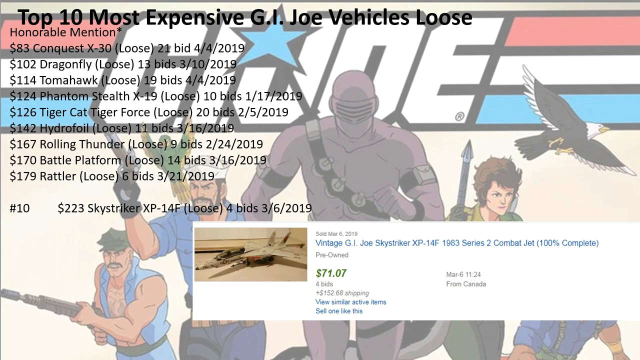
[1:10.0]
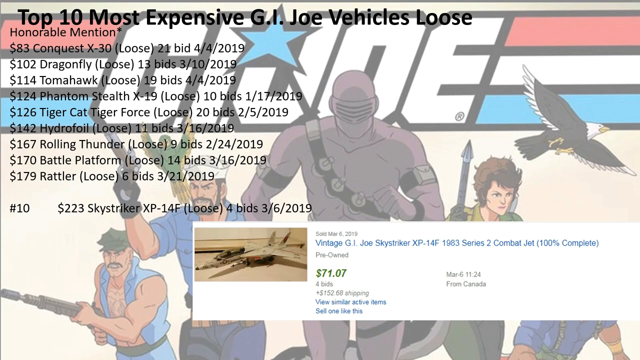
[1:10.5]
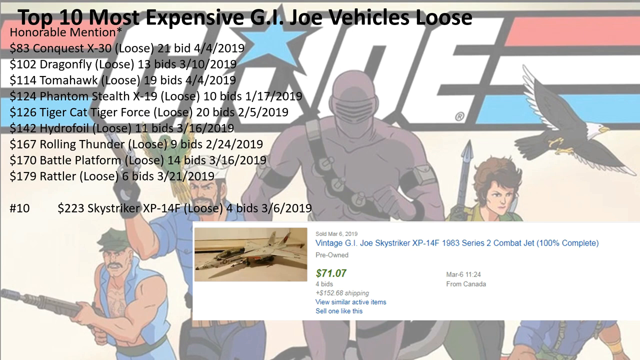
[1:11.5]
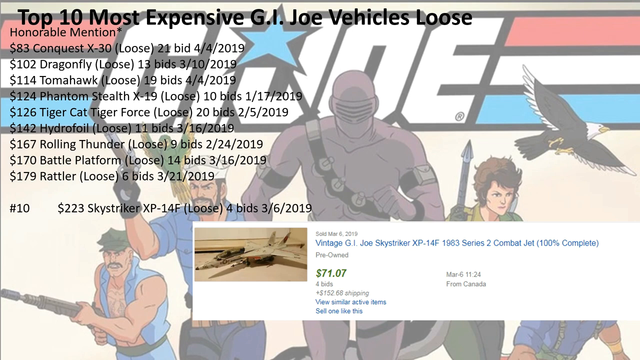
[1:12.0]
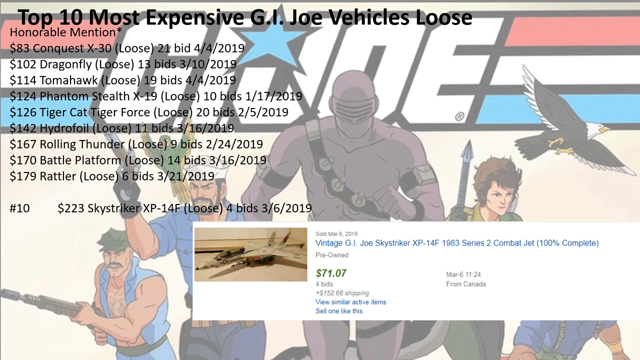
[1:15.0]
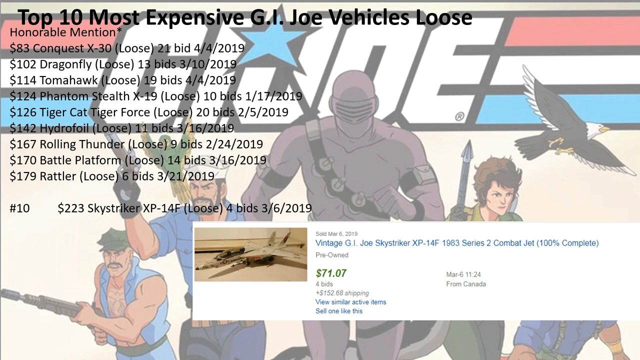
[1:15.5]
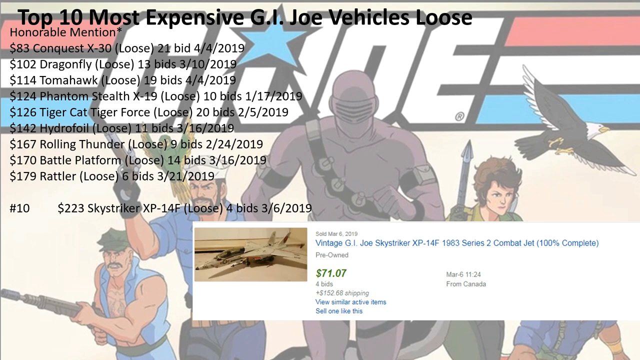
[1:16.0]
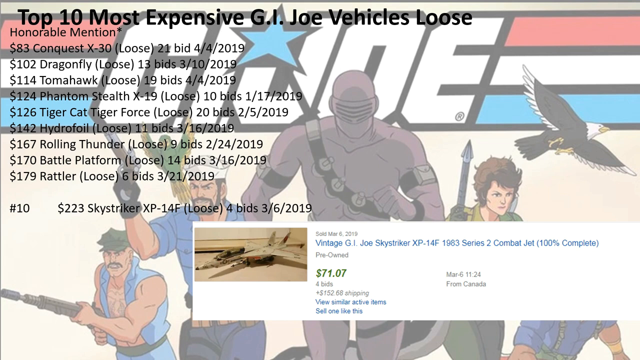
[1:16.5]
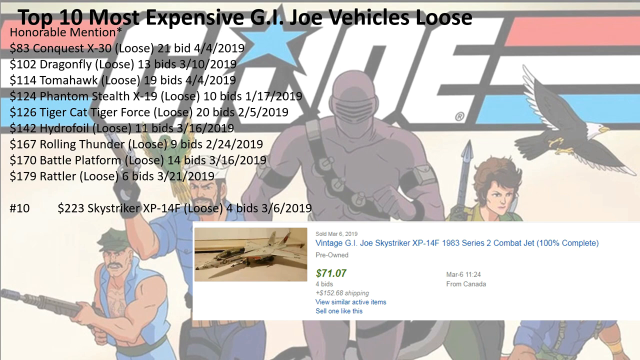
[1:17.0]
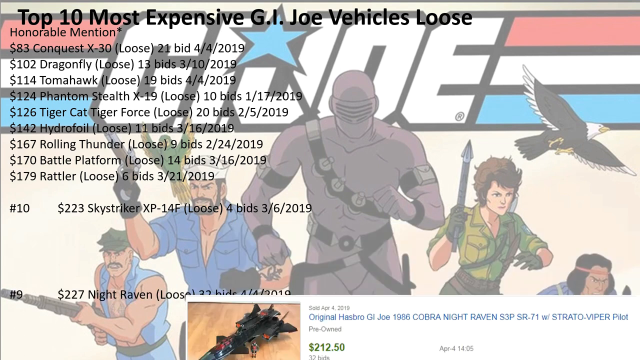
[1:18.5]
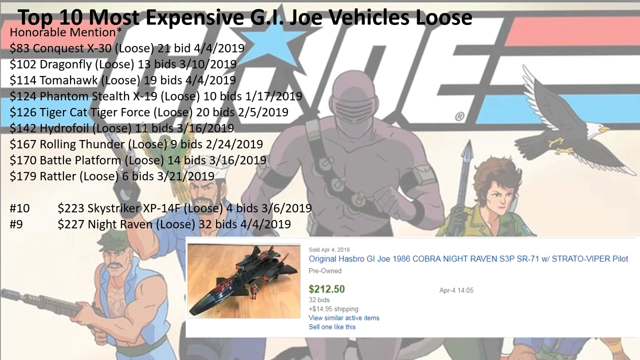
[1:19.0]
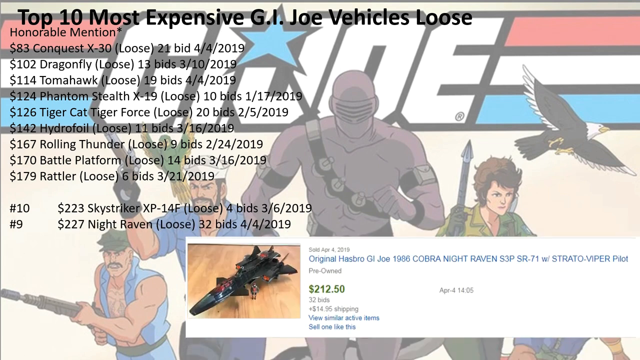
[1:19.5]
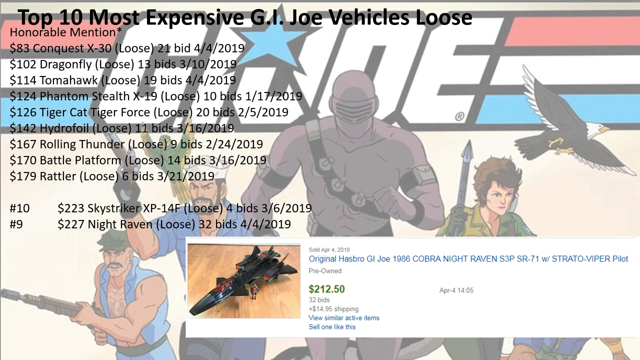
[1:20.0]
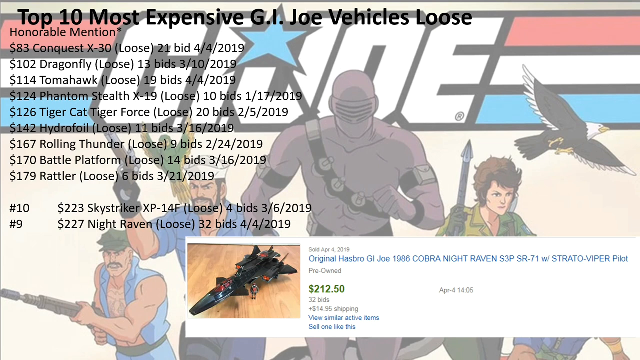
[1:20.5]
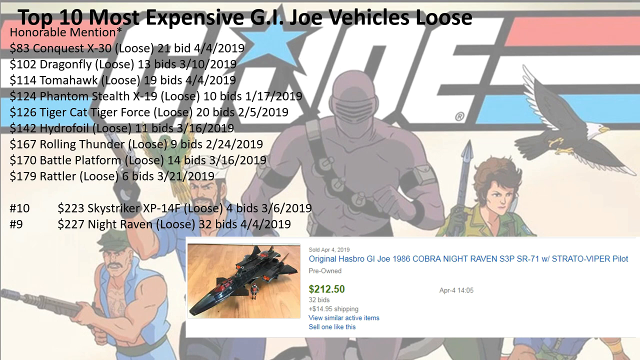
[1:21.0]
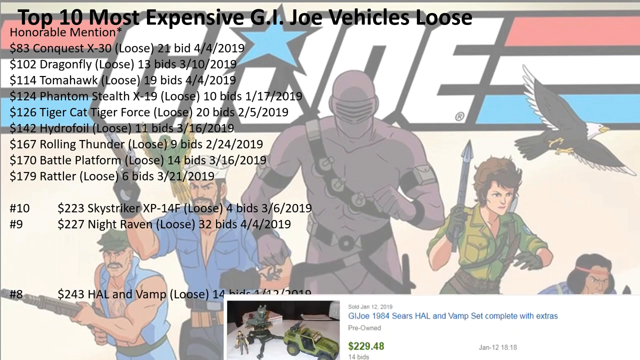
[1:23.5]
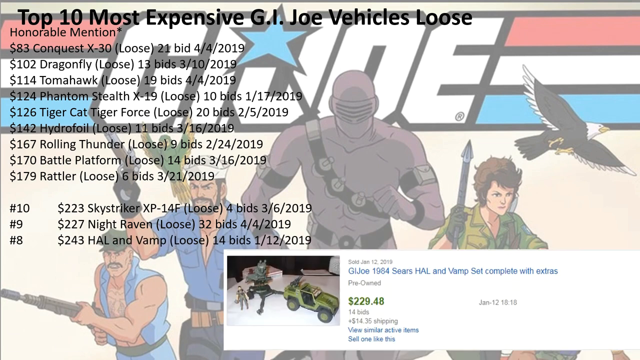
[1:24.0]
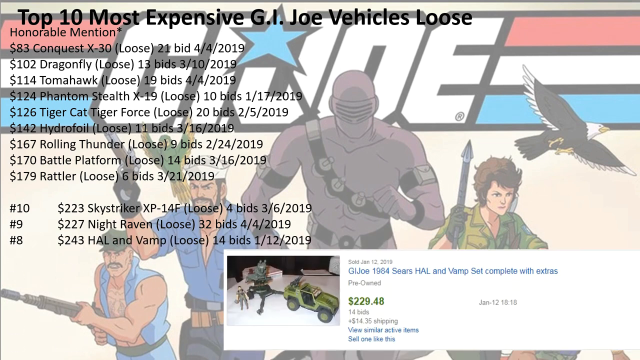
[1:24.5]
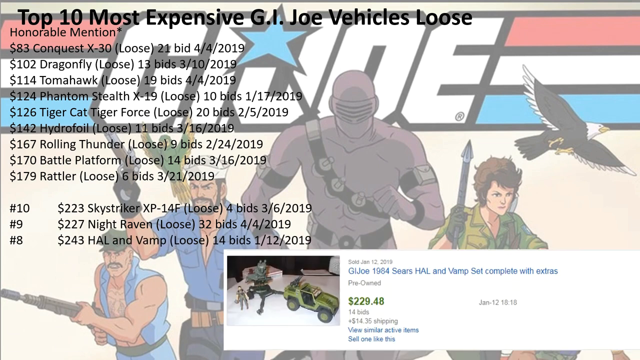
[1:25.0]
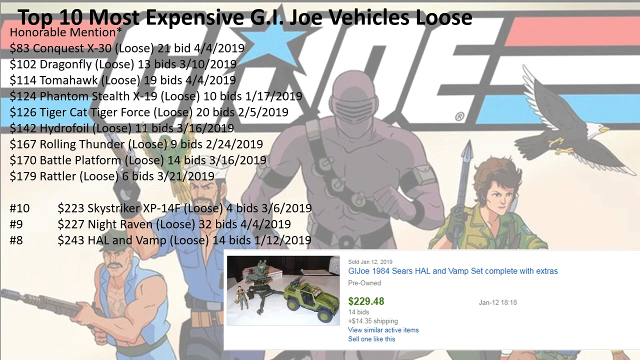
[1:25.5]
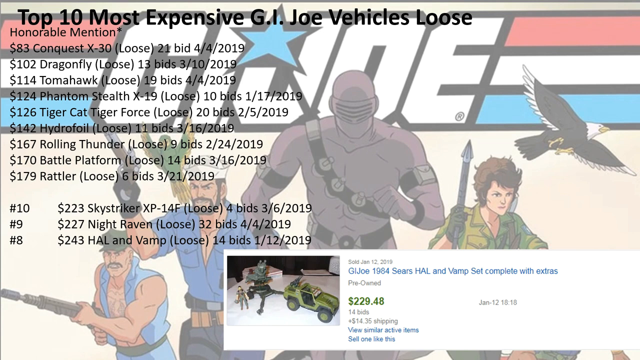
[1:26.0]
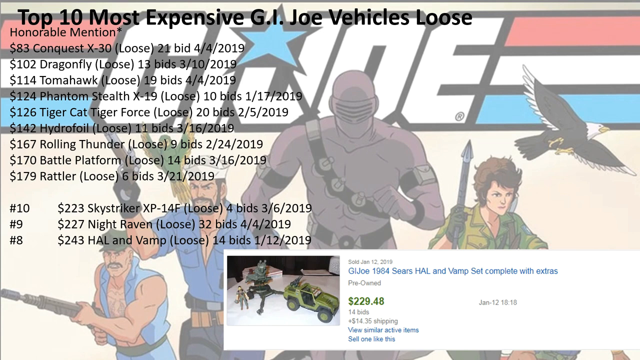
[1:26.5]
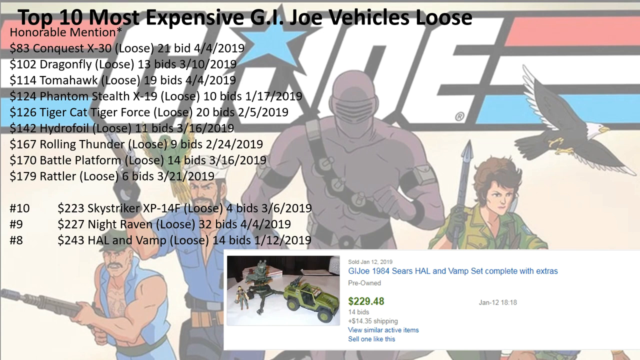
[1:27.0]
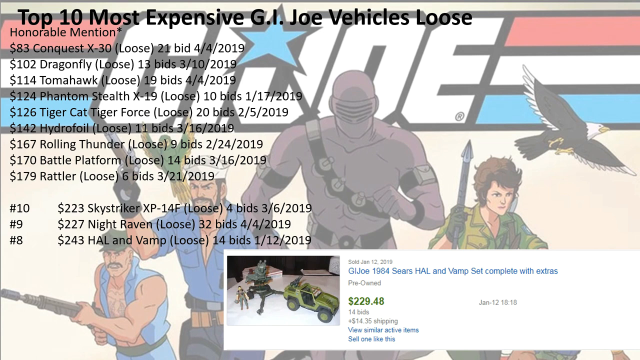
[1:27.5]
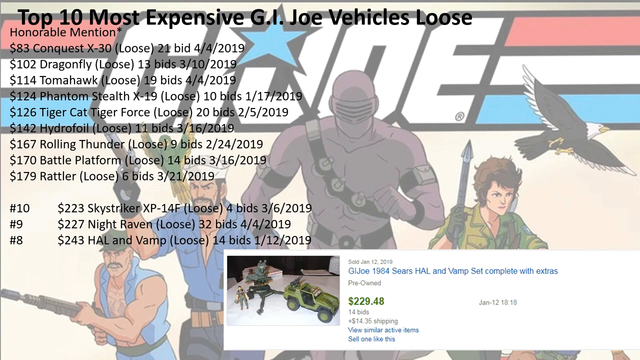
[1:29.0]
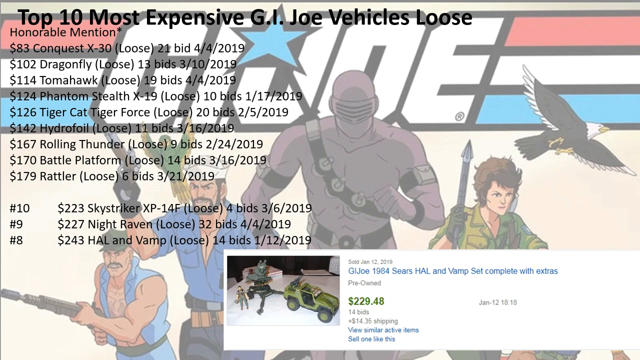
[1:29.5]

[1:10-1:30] The number 10 spot remains on screen: the vintage G.I. Joe Sky Striker XP-14F, sold for $223 on March 6, 2019, from Canada. Next is the number 9 spot, the $227 Knight Raven, with the listing reading "Original Hasbro G.I. Joe 1986 Cobra Knight Raven S3P SR-71 with Stratovipor Pilot"; the price was $212.5 with $14.95 shipping, there were 32 bids, and it sold on April 4, 2019. The background does not change at all; only the listings are shown. Then the number 8 spot appears: the $243 HAL and Vamp with 14 bids, from January 12, 2019, priced mostly on the item itself with $14.35 in shipping. Its title reads "G.I. Joe, 1994 Sears HAL and Vamp set complete with extras", with little other information about the listing.